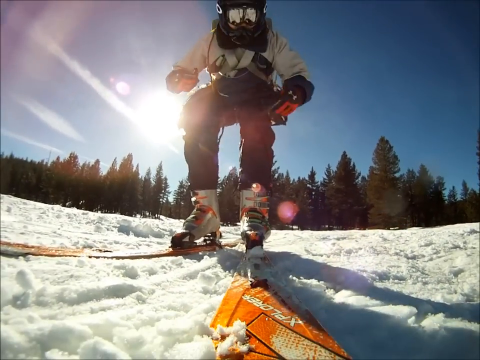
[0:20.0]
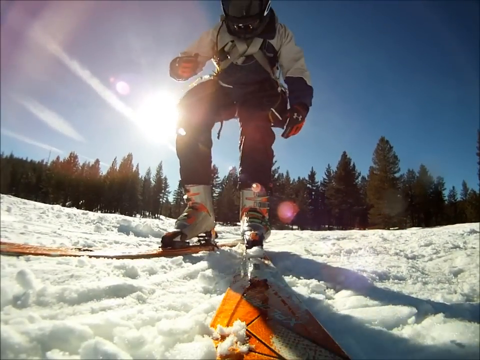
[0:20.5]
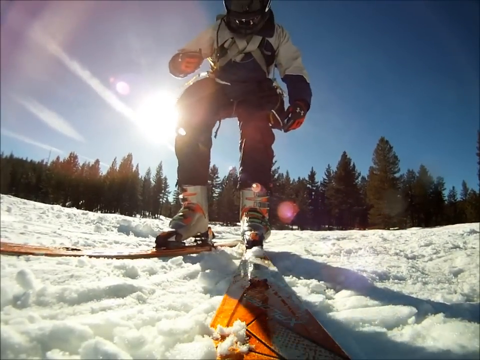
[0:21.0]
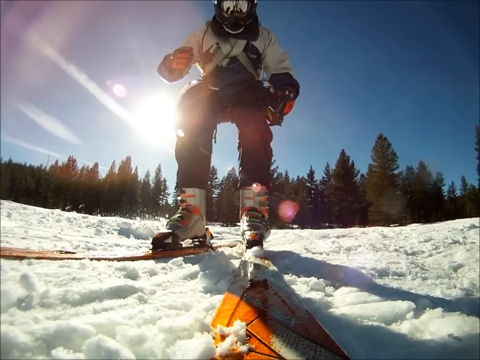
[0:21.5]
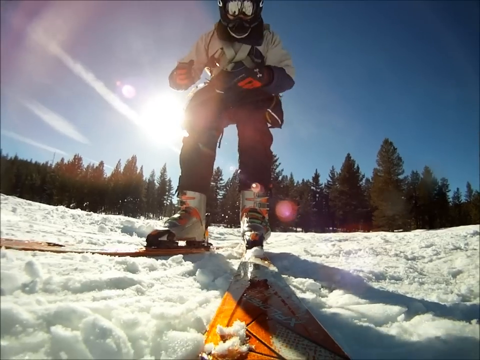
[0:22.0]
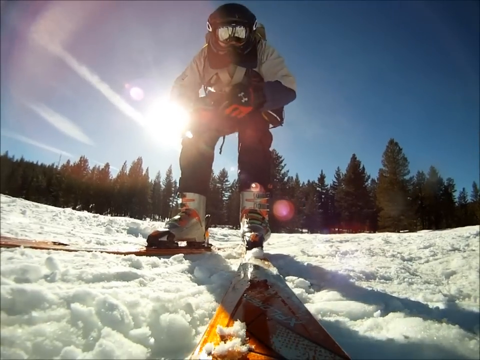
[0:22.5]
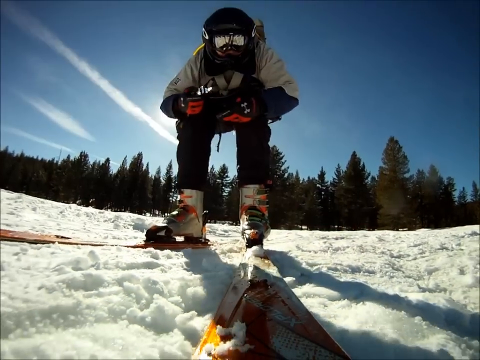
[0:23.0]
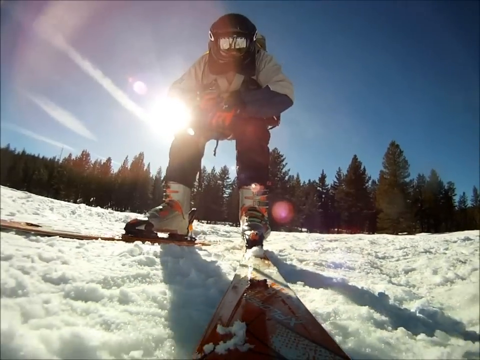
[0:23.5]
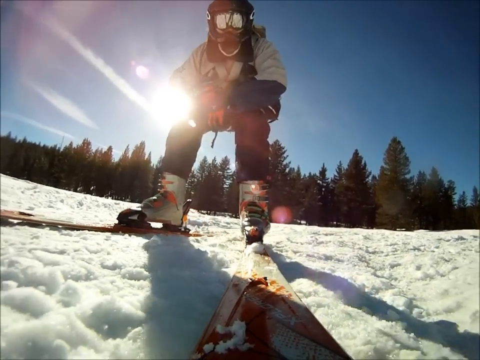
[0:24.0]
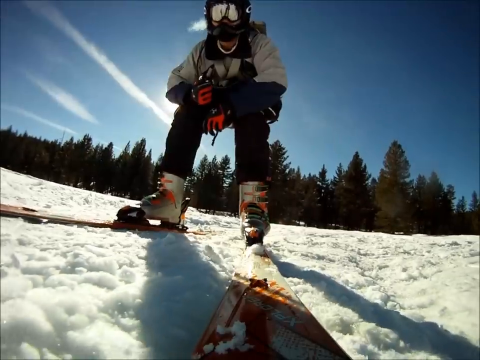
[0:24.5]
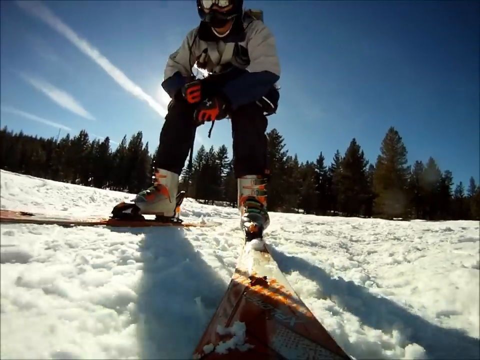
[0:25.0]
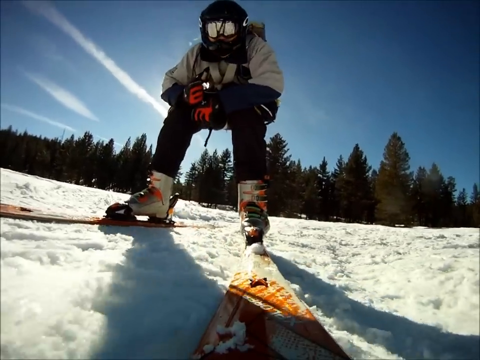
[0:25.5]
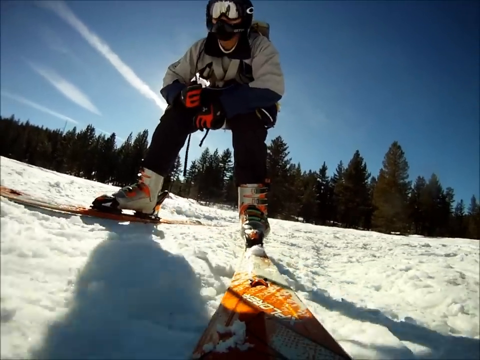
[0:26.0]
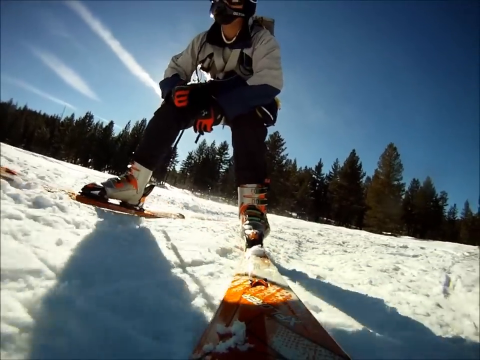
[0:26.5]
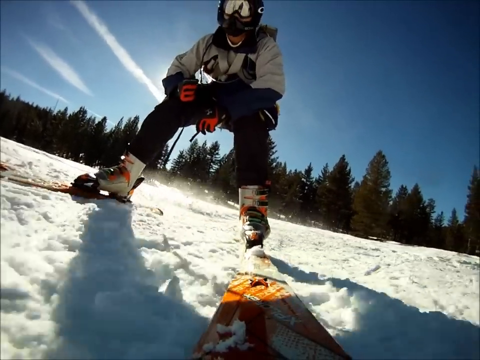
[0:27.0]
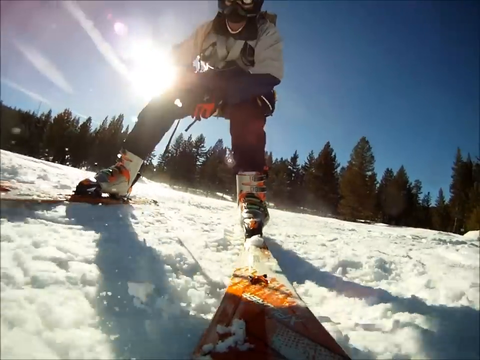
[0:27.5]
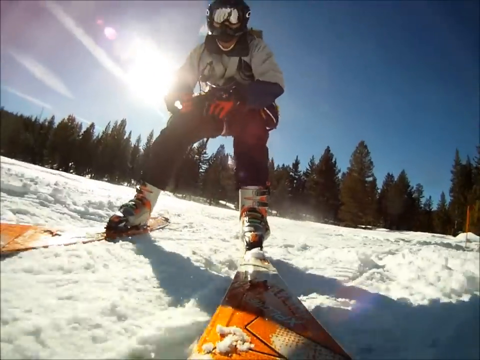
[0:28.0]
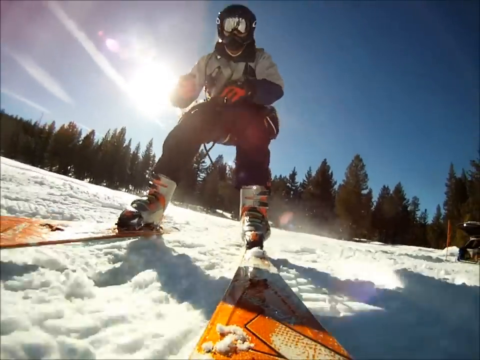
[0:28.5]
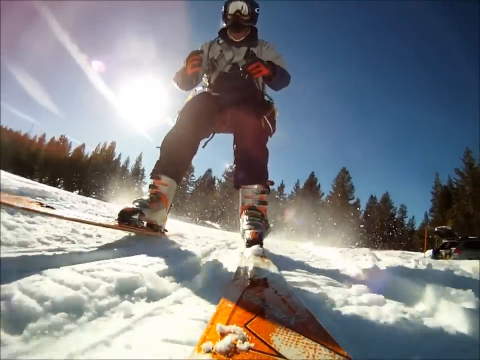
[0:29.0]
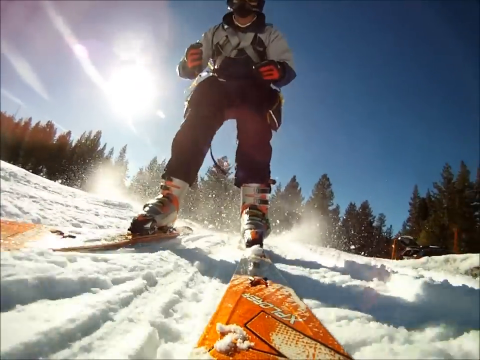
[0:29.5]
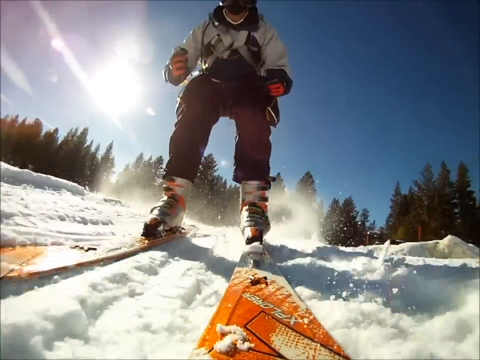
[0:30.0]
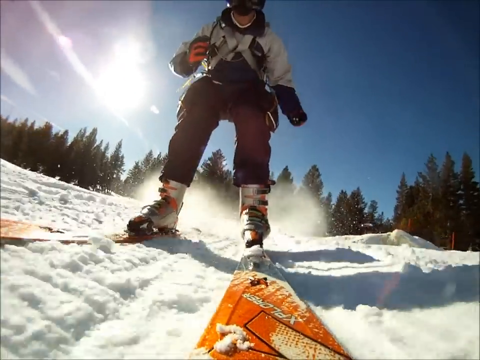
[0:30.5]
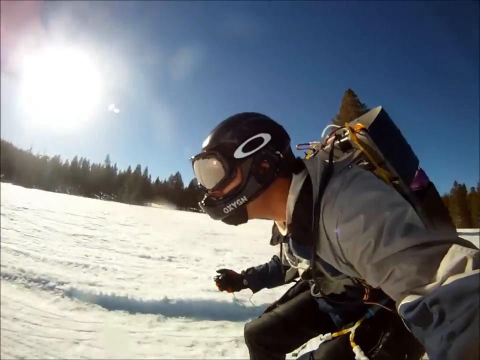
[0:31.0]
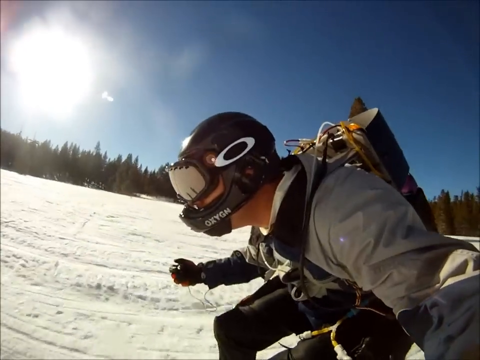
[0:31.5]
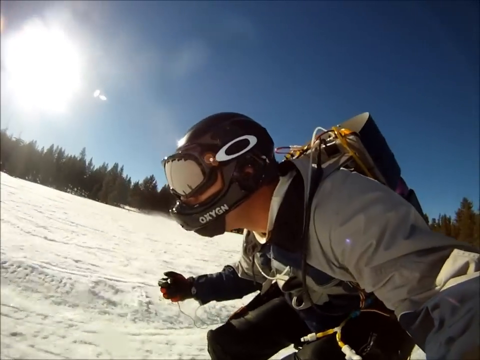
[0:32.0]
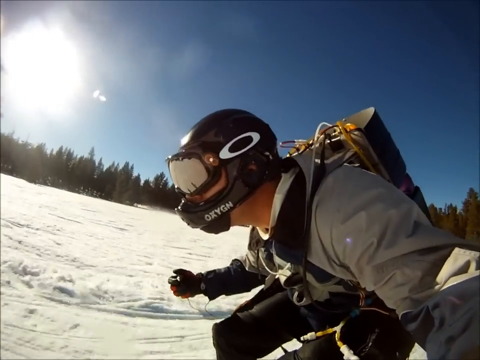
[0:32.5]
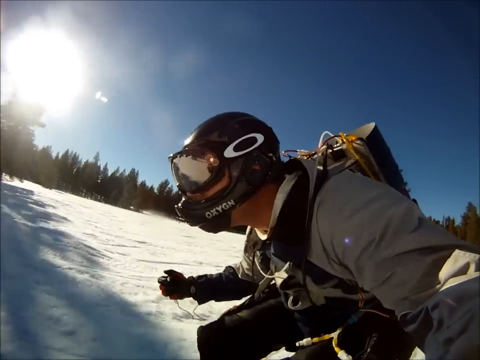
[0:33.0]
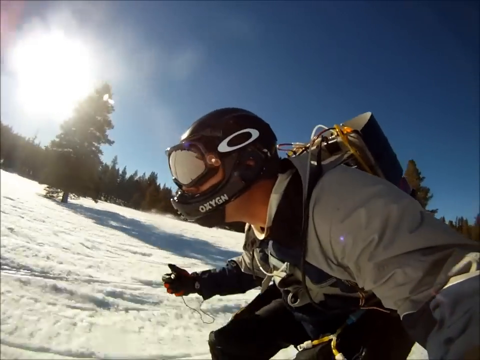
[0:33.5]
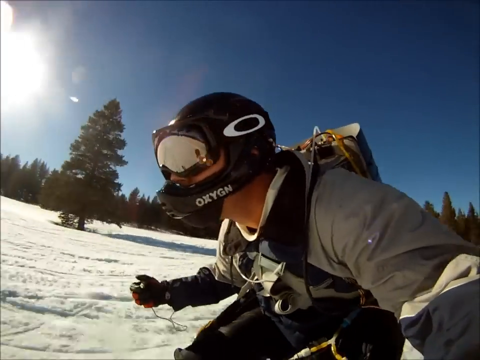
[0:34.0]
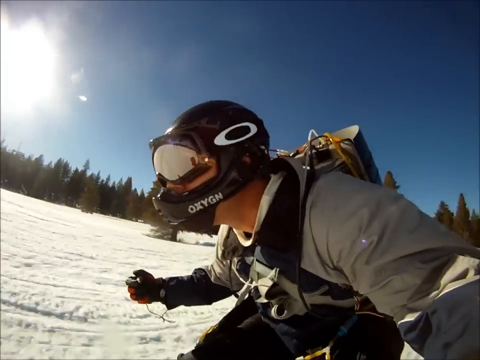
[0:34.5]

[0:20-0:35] The man, now in his skis, starts sliding and goes faster and faster, and he is seen to be wearing a pack, presumably a jet pack. Judging by the orientation of the trees, he appears to be on fairly level ground rather than going downhill, with the jet pack pushing him along. A side view shows him wearing a helmet with a reflective visor. The skis are orange and his boots are apparently gray. He apparently has no poles, and he wears red gloves. In a side view, the trees rush by.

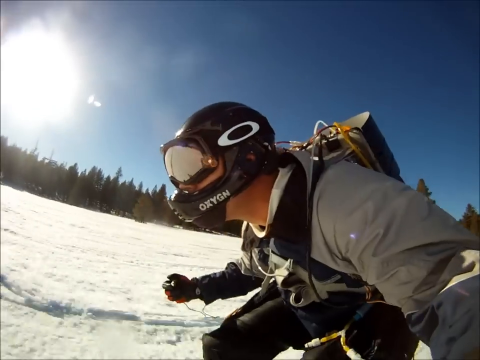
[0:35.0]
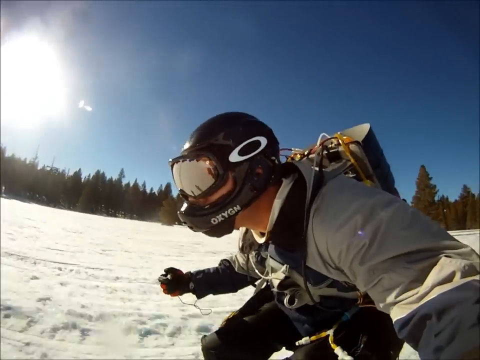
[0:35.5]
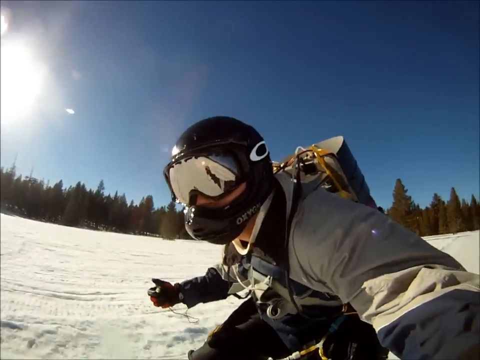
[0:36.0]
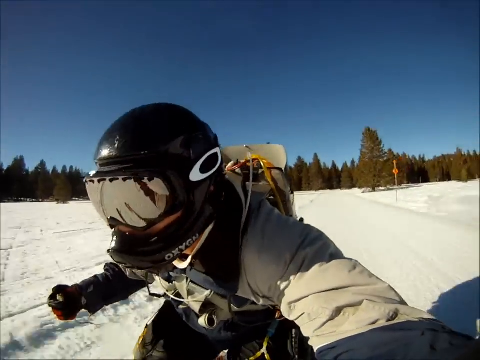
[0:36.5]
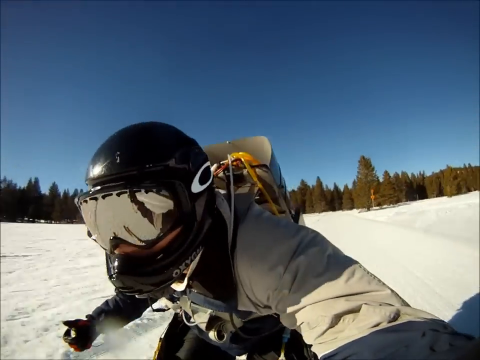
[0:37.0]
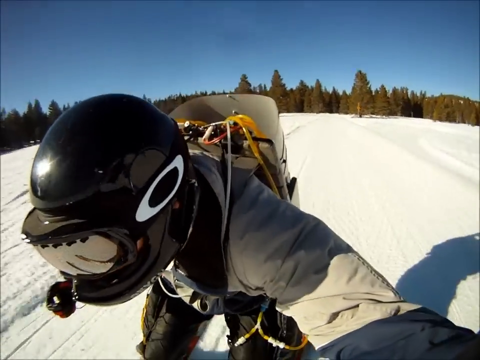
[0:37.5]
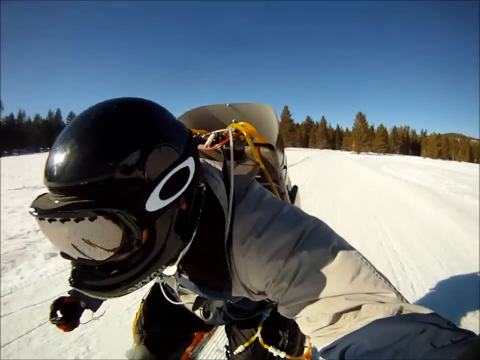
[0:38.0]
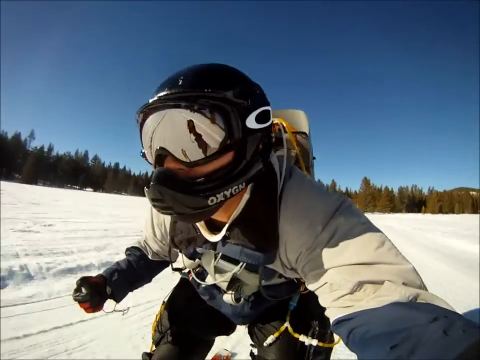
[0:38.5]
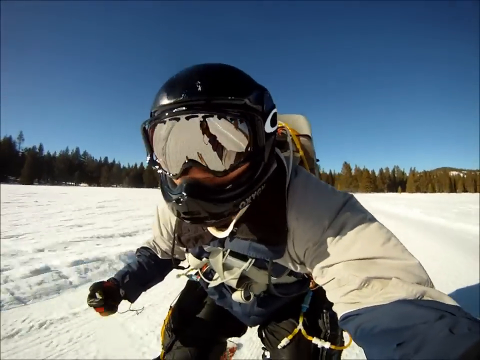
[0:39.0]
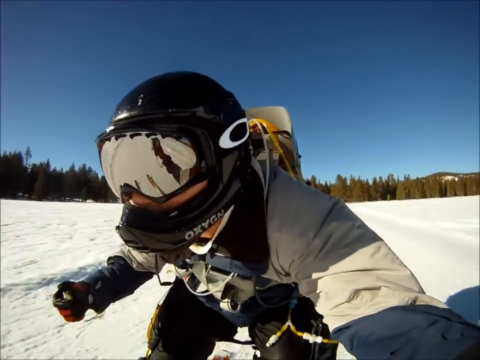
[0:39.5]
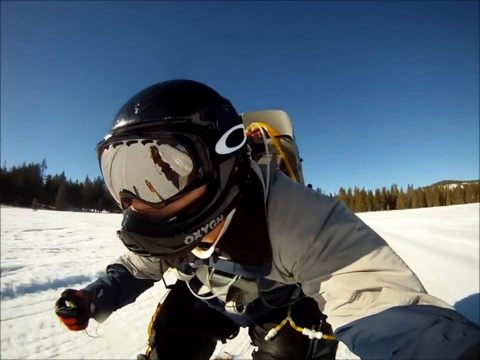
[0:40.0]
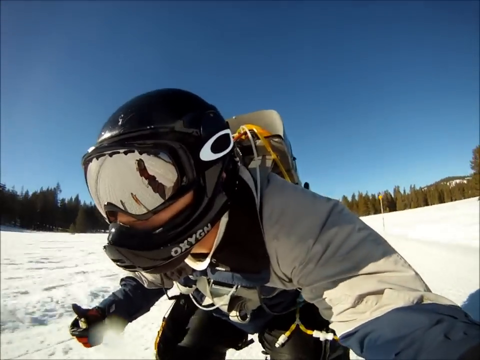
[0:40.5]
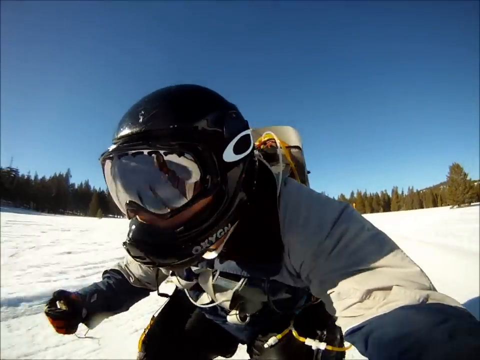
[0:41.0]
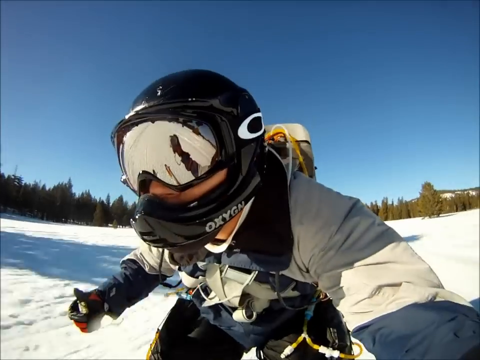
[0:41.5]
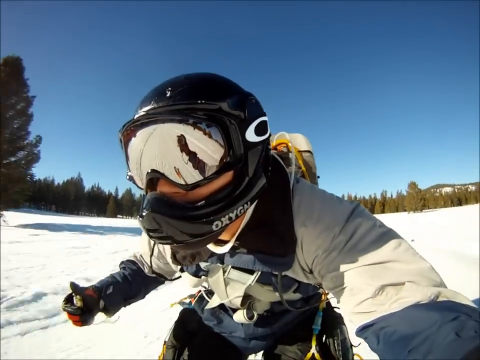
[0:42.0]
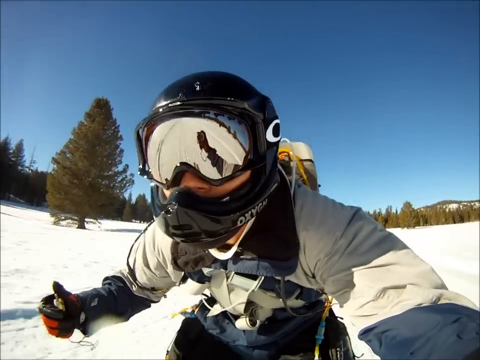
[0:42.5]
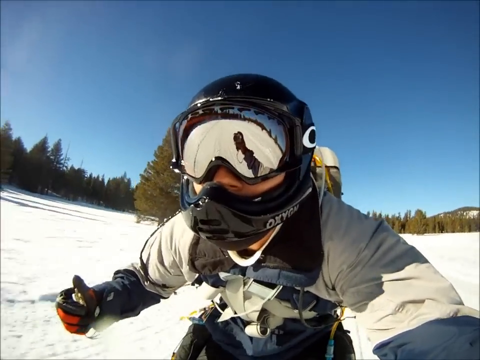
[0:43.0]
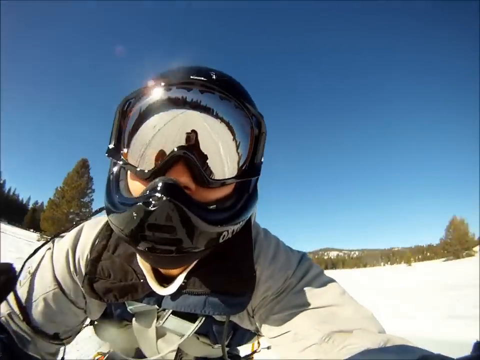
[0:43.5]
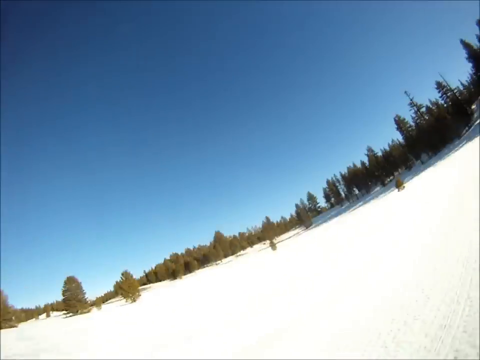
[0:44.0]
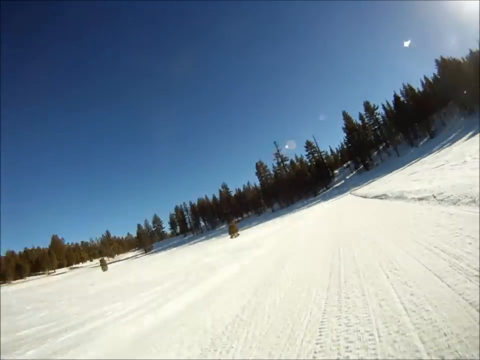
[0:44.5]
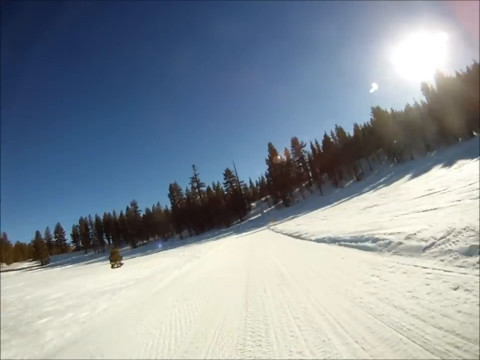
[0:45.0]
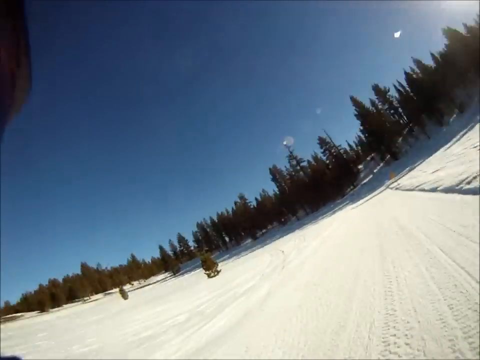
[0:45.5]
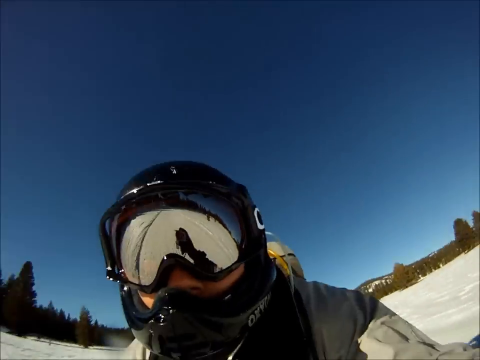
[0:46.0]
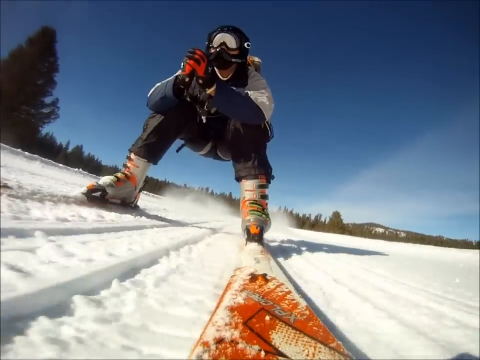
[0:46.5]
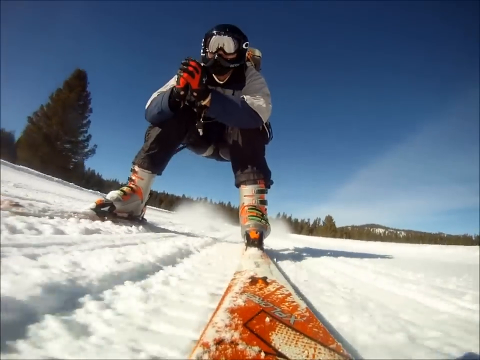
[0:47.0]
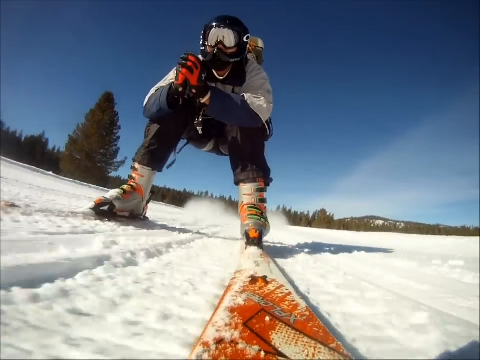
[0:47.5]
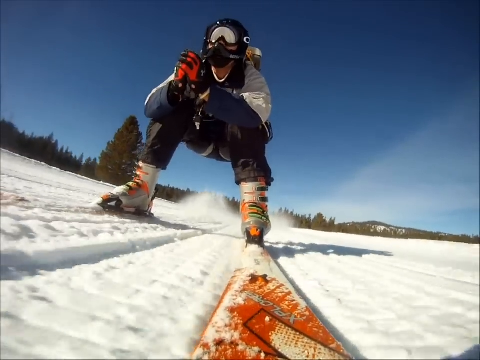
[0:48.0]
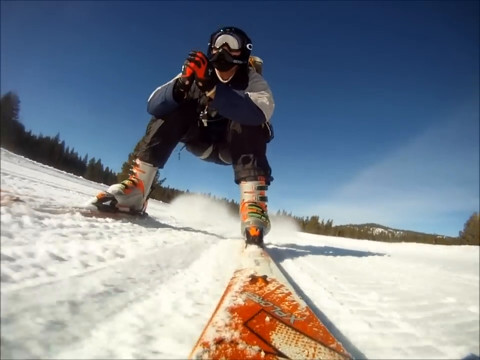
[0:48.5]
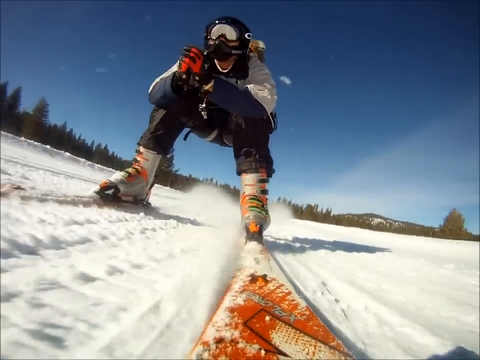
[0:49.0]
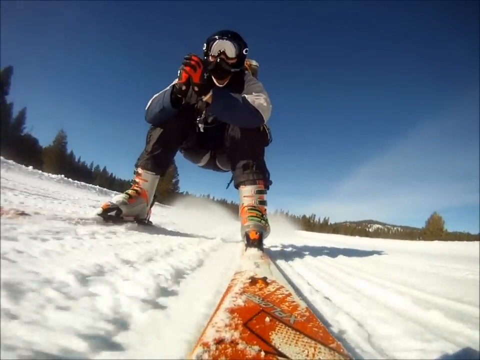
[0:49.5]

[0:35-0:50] The man moves along level ground with the pack on, wearing what seem to be mirrored goggles rather than a visor. The view pans forward to show where he is going. He is seen from different angles; it looks like somebody is moving alongside him filming, and a figure with a shadow may be visible reflected in his goggles, though this is unclear. The ground still looks level and he seems pretty stable. He holds one arm out, possibly holding a GoPro on a stick.